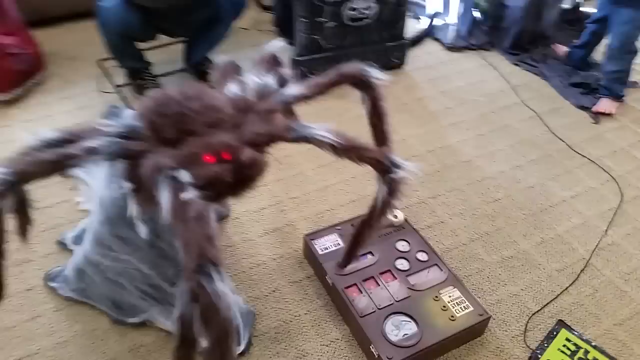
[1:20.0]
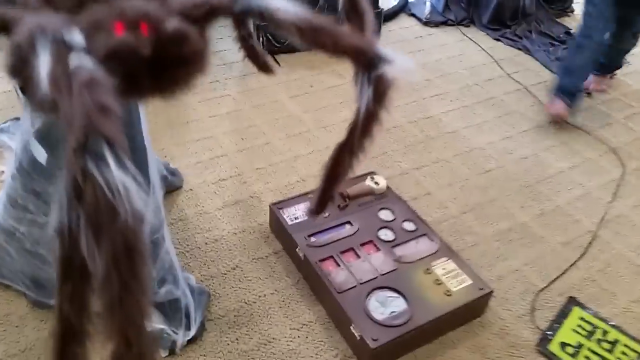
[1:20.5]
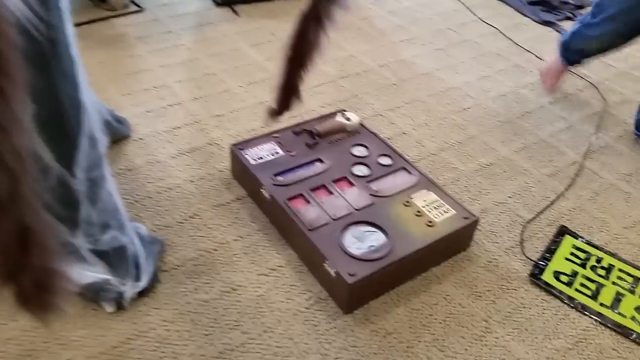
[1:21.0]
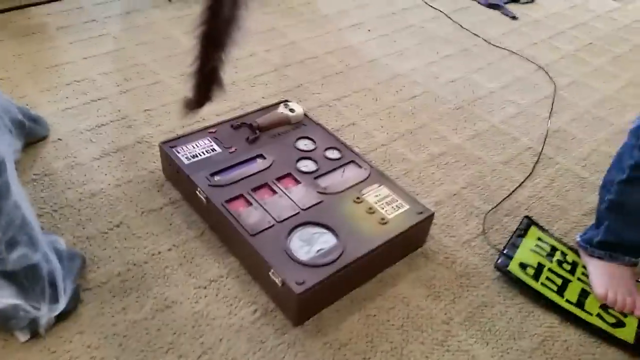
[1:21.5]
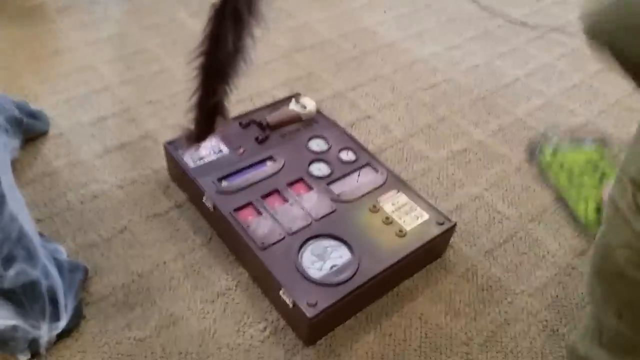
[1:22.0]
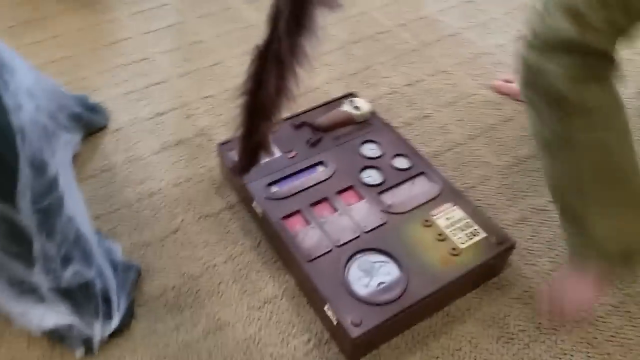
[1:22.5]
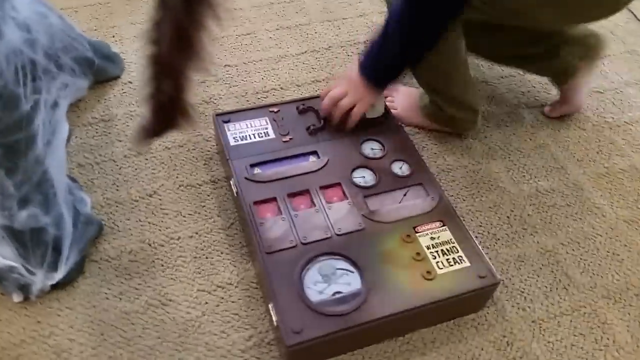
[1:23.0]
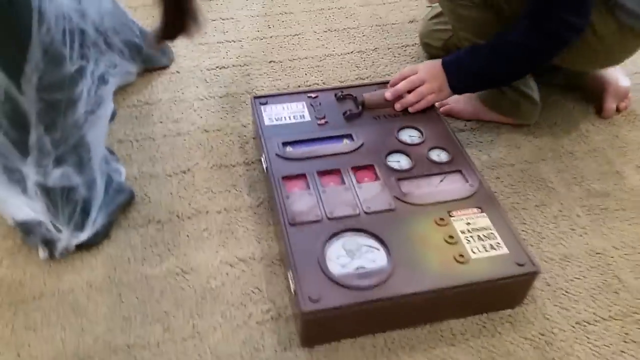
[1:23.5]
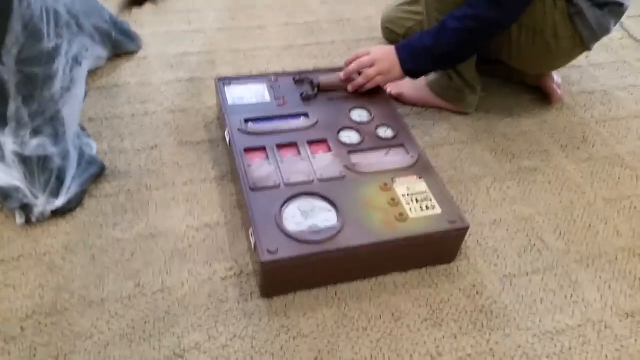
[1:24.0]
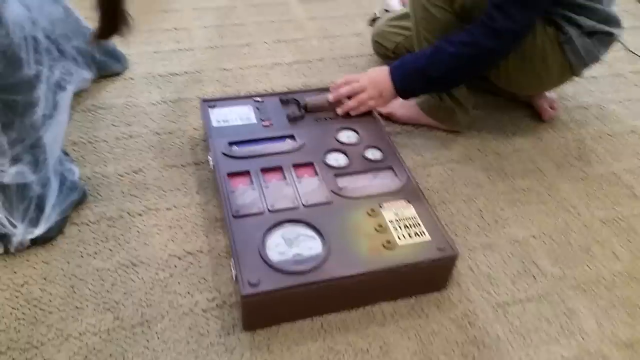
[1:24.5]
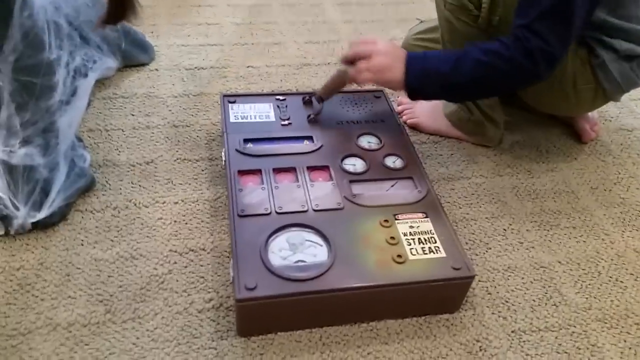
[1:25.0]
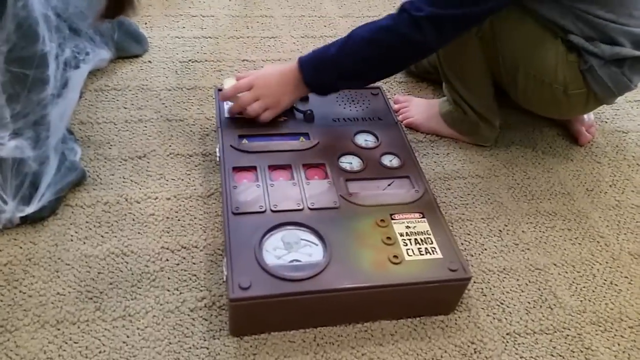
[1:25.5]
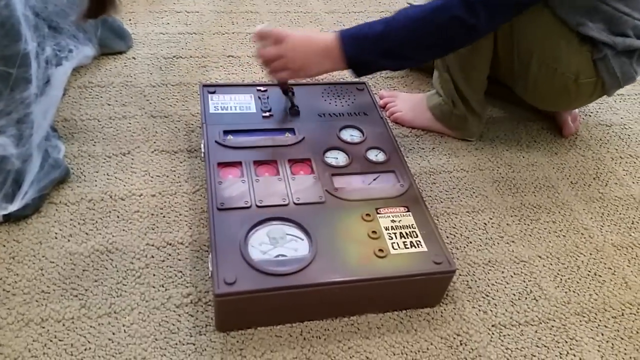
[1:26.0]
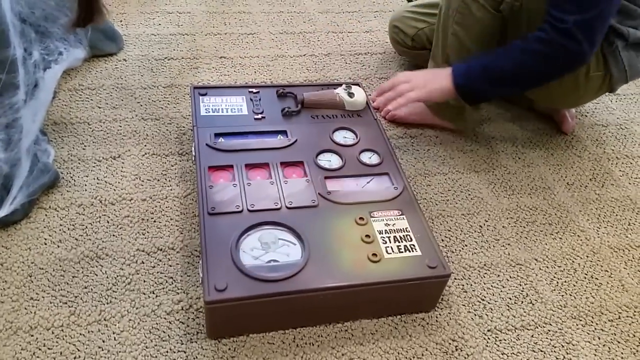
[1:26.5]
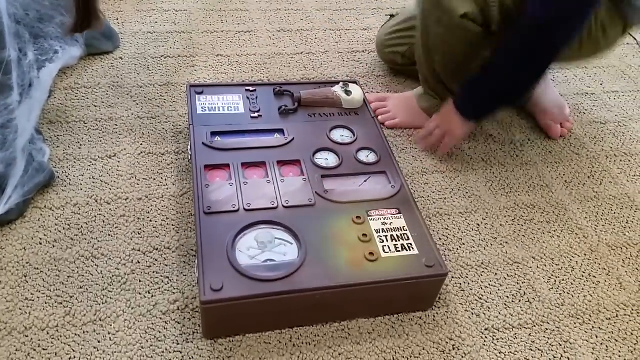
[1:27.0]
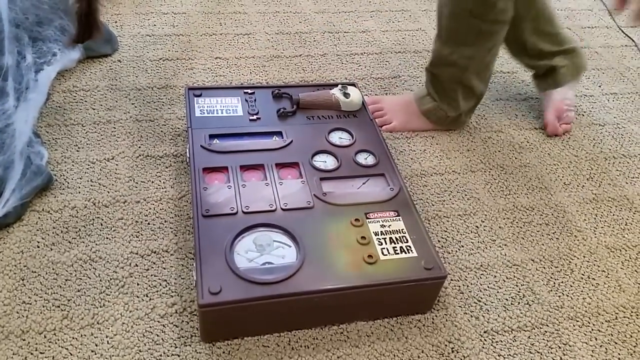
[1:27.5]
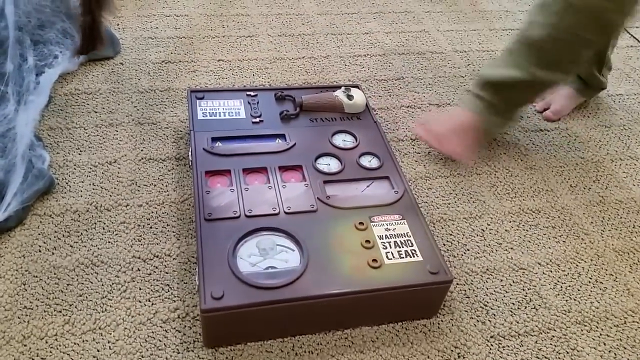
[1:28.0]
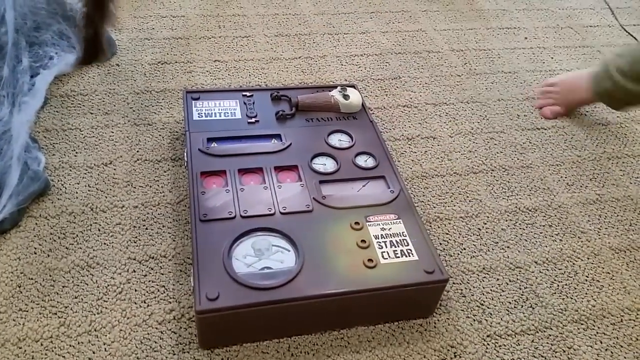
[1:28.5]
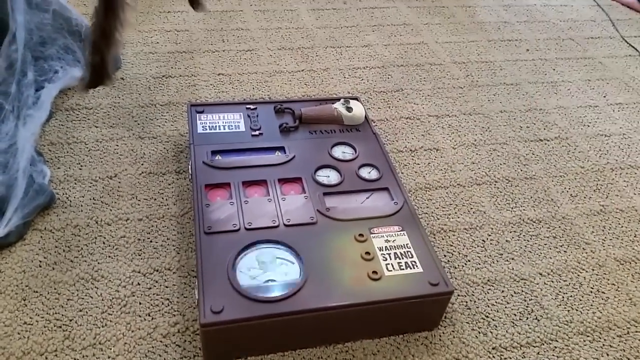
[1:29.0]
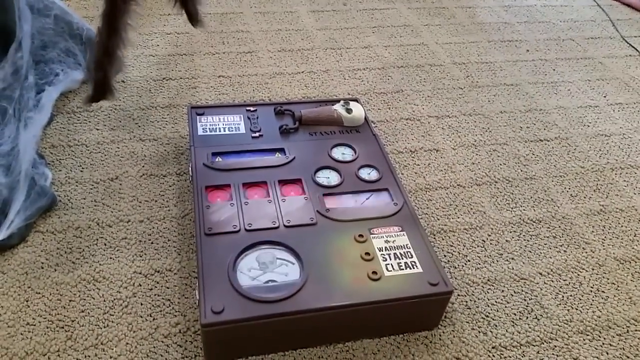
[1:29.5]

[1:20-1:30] A little boy plays with a box that says "stand clear" and has switches on it; it is made to look as if it controls something, almost like a paranormal activity type thing, though it may just be decoration. The box is right to the right of the spider. With the child standing to the right of the spider, it is clear how high the spider jumps as it goes up and down. The boy pulls a lever on the box back and forth; the lever appears to have a skeleton head on it. There are flickering, flashing lights in the box, which almost looks like an electrocution type box, with a Frankenstein type vibe.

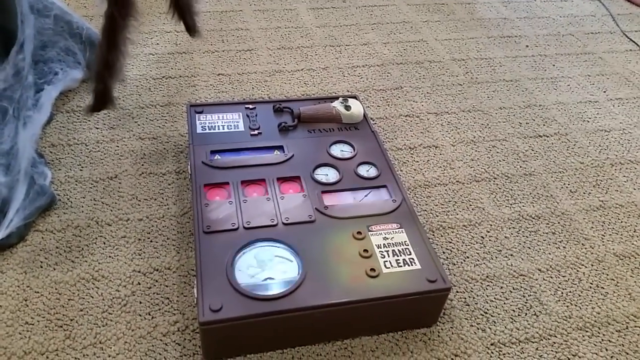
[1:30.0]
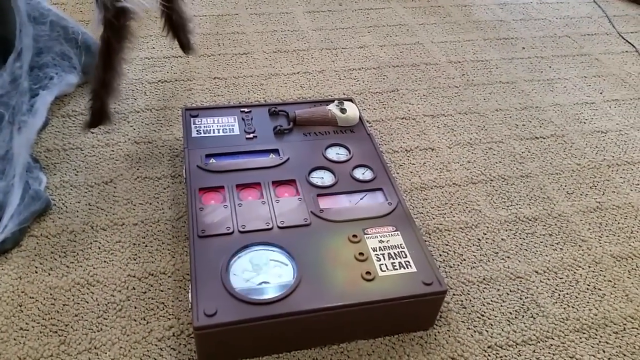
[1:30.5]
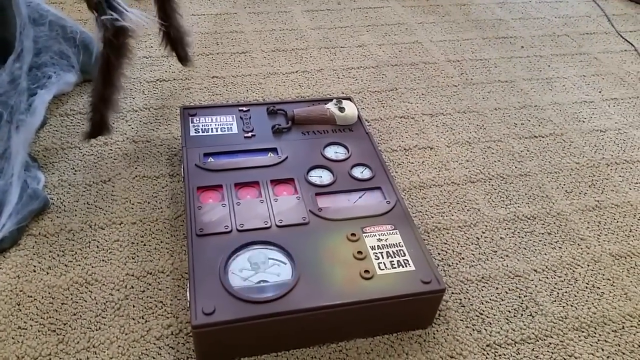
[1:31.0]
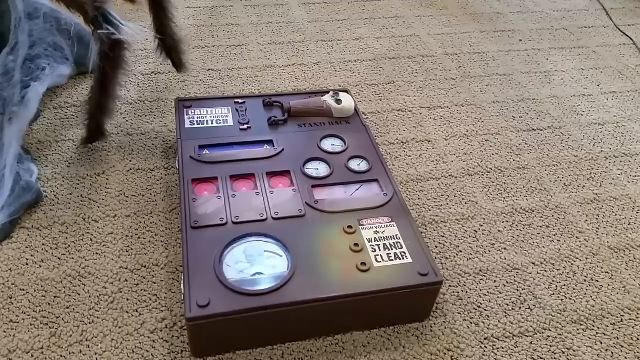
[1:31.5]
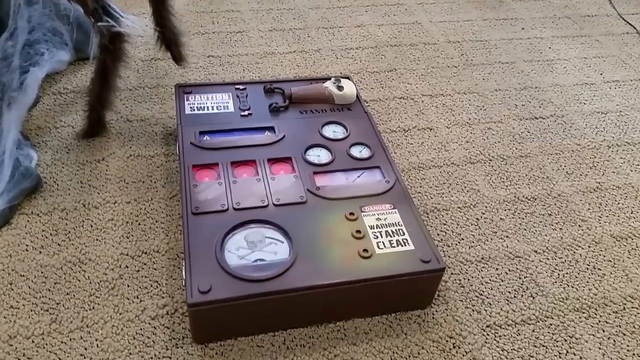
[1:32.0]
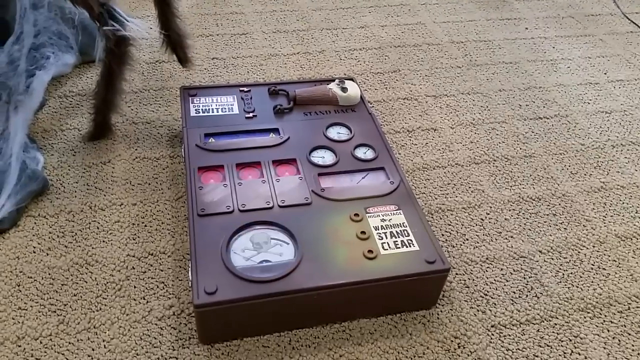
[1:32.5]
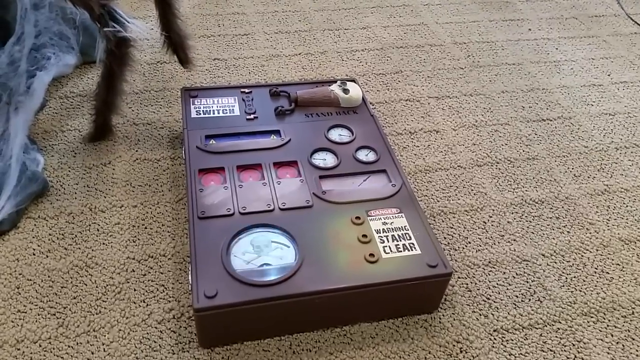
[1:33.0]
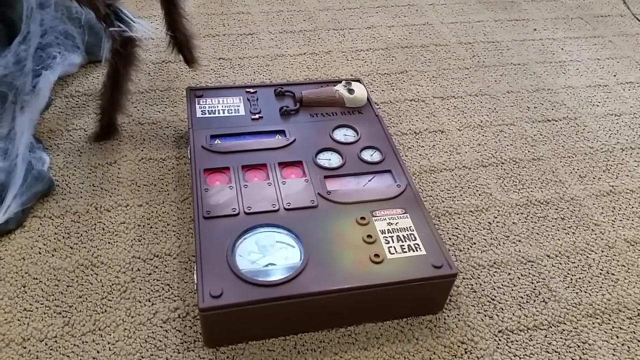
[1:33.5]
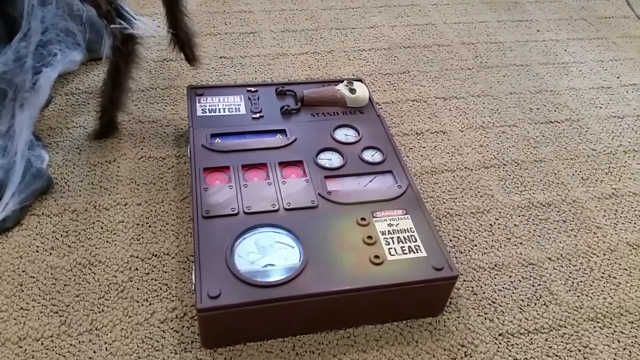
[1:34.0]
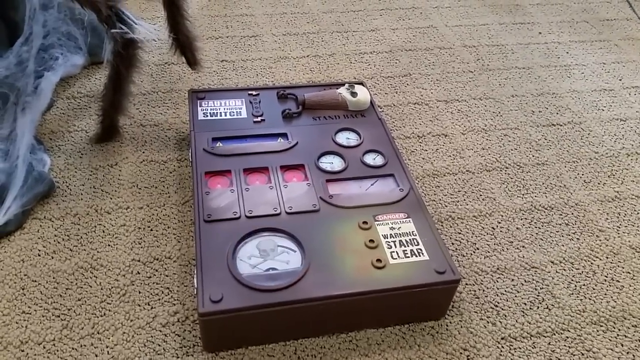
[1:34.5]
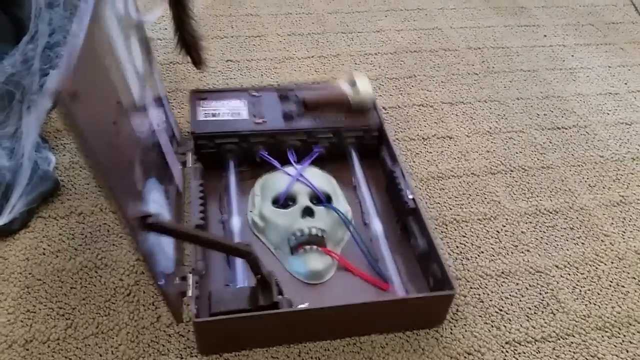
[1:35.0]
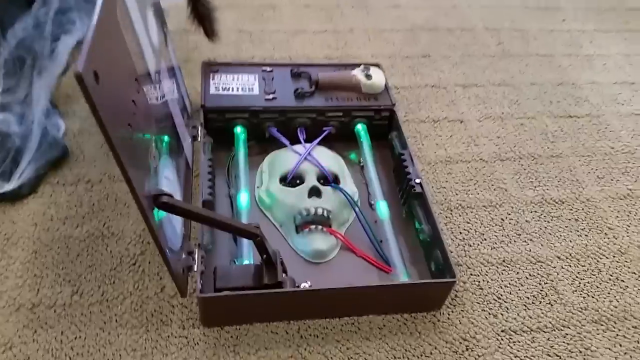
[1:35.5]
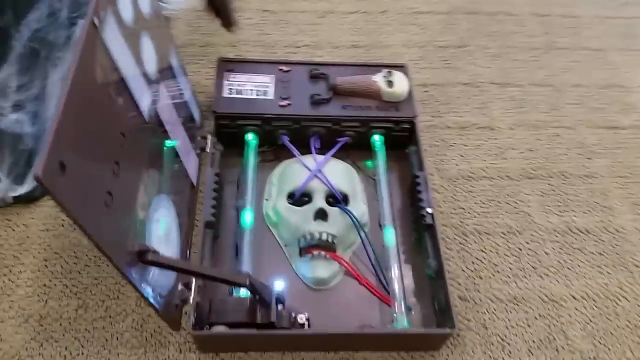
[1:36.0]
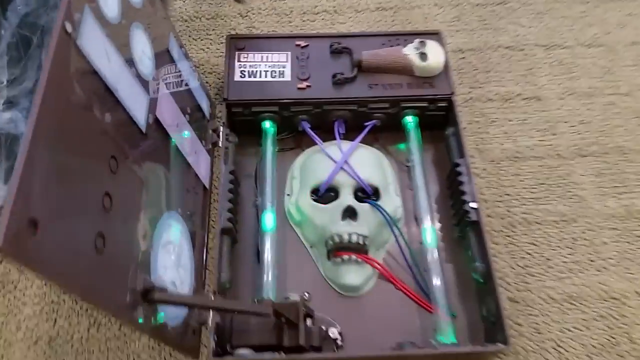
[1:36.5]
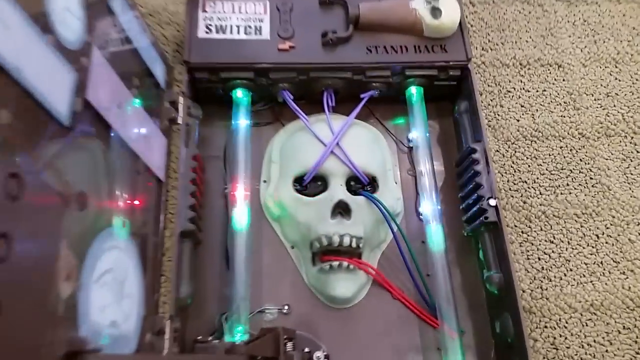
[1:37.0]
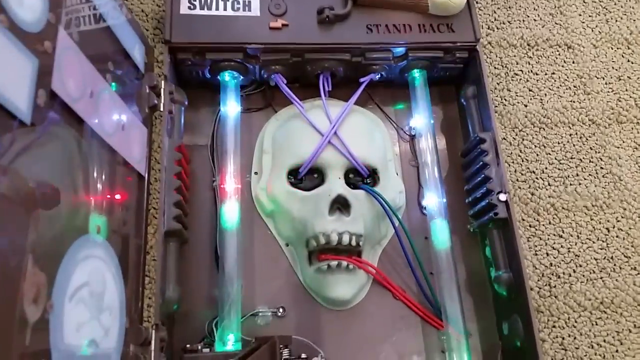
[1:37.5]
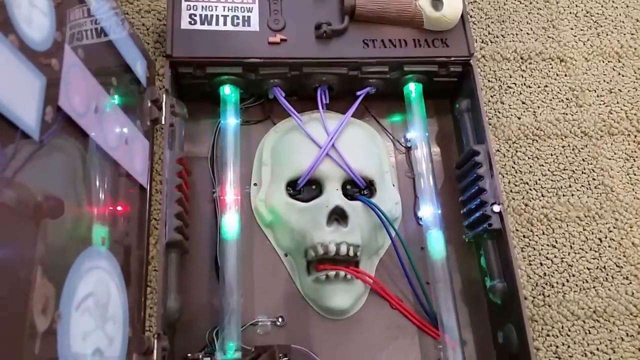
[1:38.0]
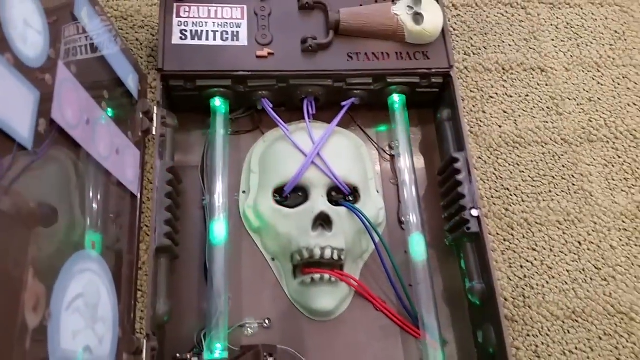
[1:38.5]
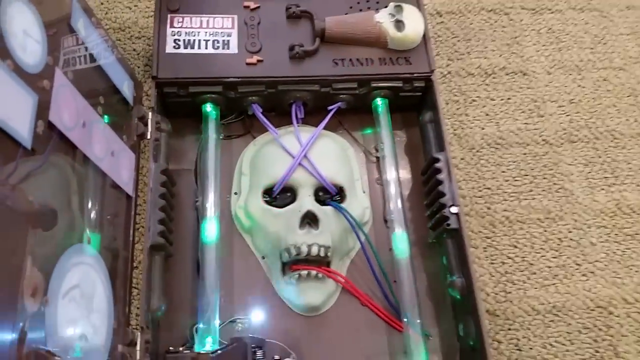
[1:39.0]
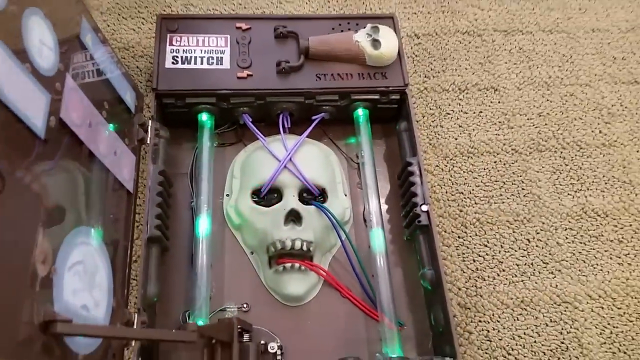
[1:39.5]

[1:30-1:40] The view focuses on the box, which flips open on its own. Inside, wires connect to a skeleton head: red wires go into the mouth, blue wires go into an eye, and three purple wires also go through the eyes. The eyes flash red, and two cylindrical green lights are next to the skeleton head. The skeleton head has its teeth showing. On the front, the box says "stand clear", "caution switch" and "stand back". It seems meant to look like it is bringing the skeleton to life, like in Frankenstein. The spider is still visible to the left of the box and is moving.